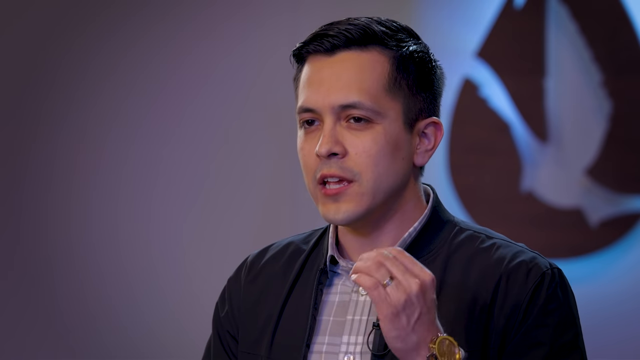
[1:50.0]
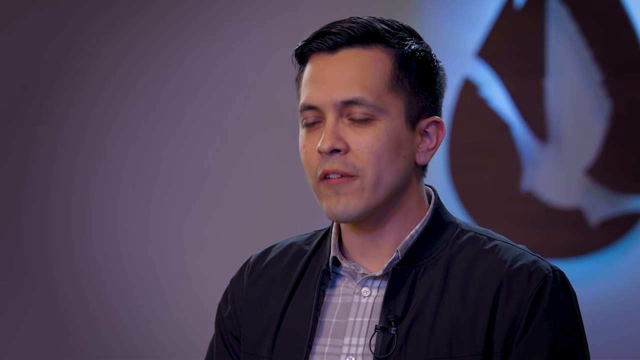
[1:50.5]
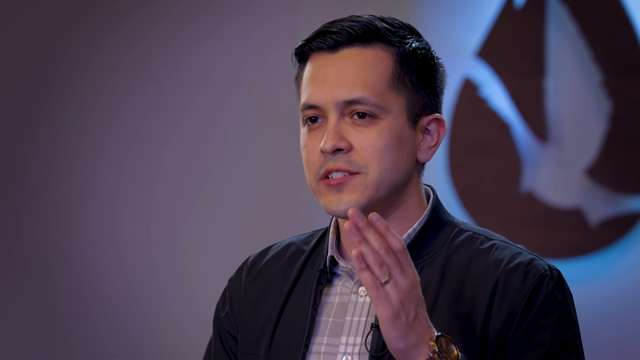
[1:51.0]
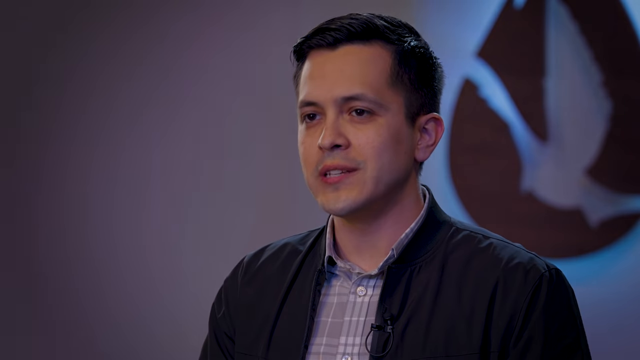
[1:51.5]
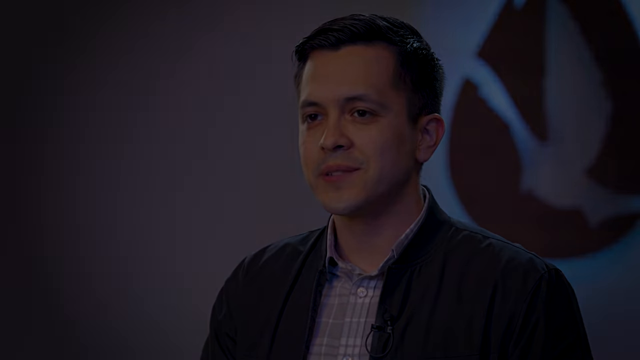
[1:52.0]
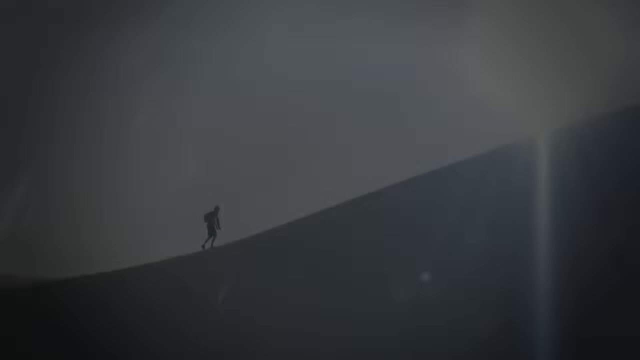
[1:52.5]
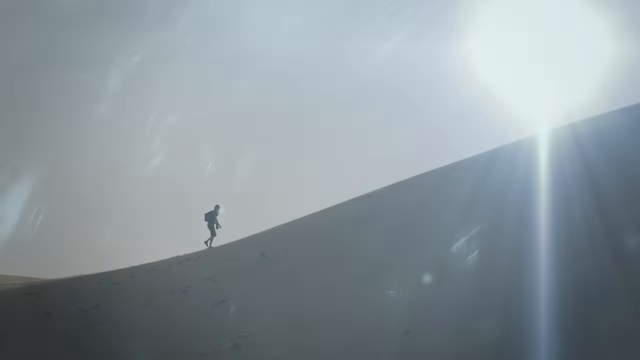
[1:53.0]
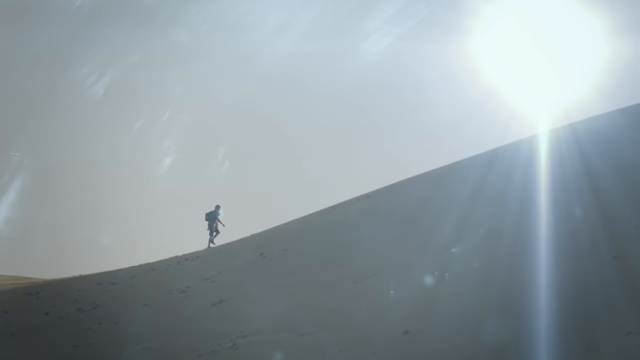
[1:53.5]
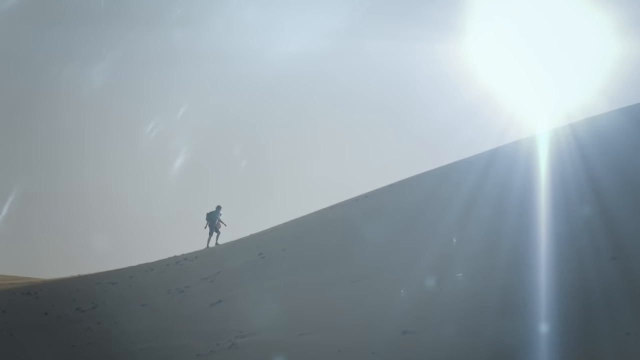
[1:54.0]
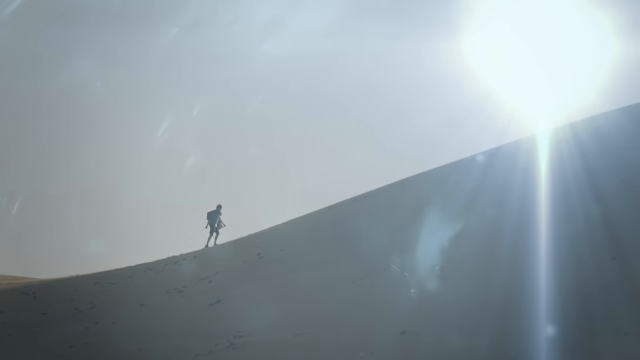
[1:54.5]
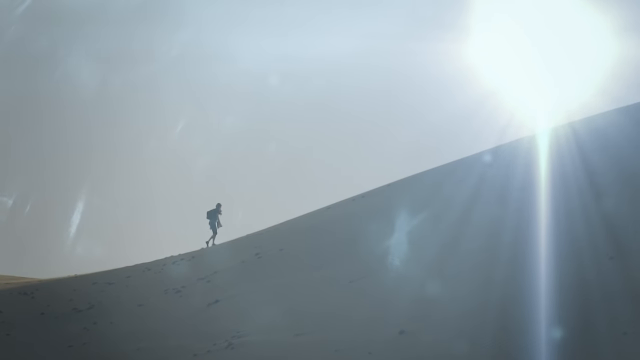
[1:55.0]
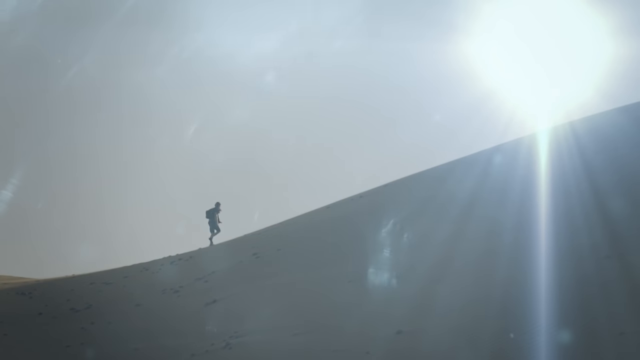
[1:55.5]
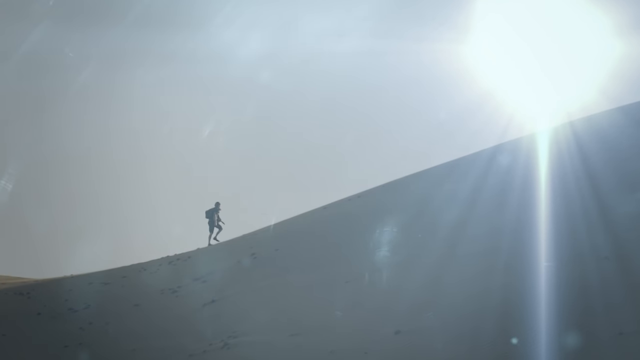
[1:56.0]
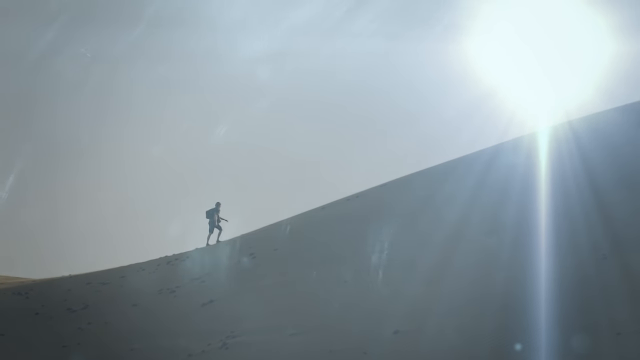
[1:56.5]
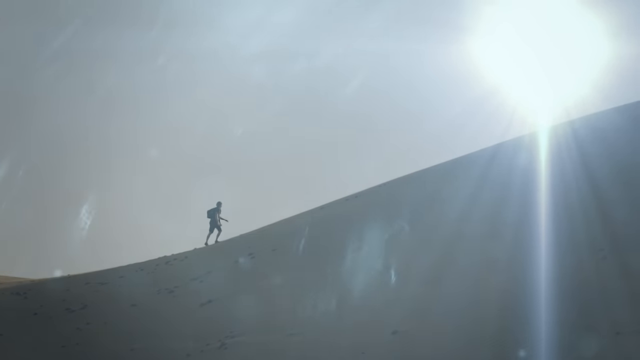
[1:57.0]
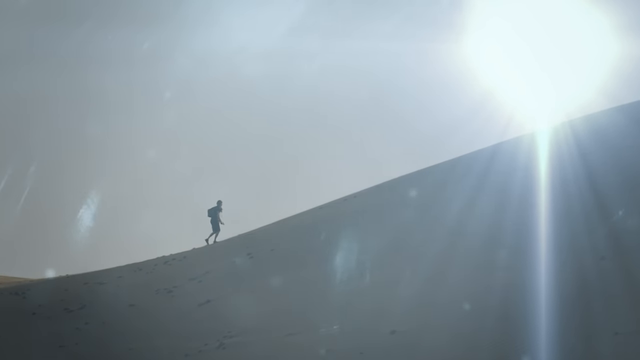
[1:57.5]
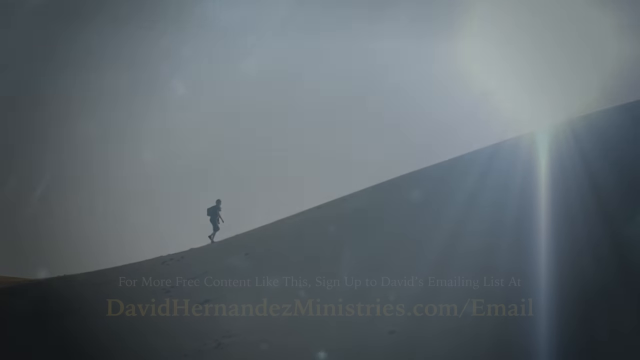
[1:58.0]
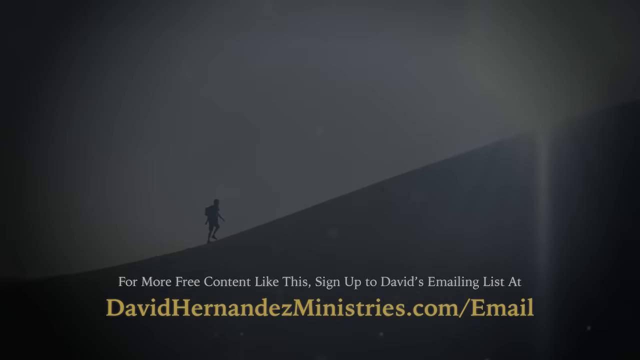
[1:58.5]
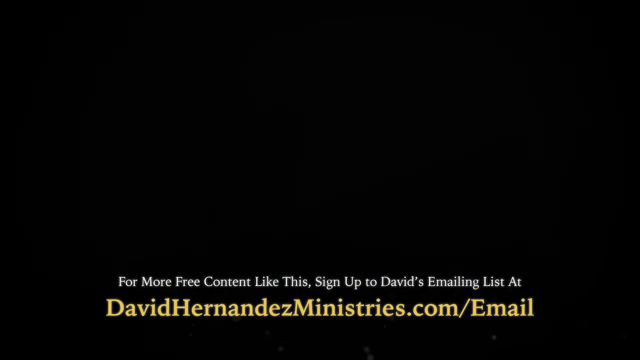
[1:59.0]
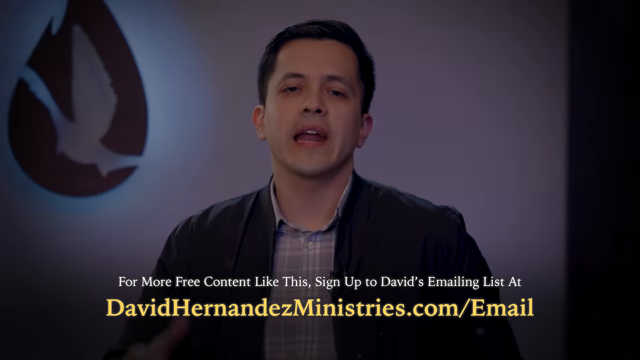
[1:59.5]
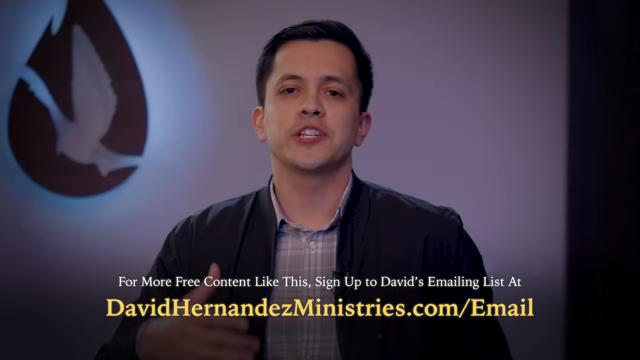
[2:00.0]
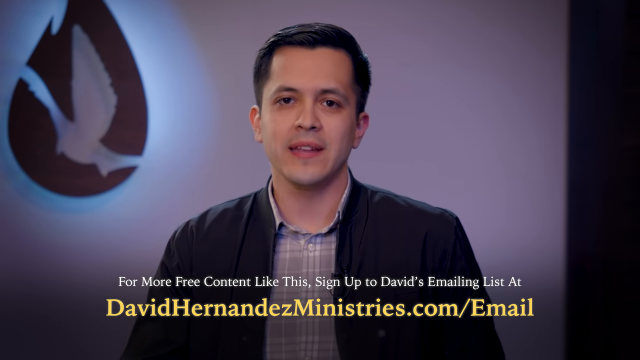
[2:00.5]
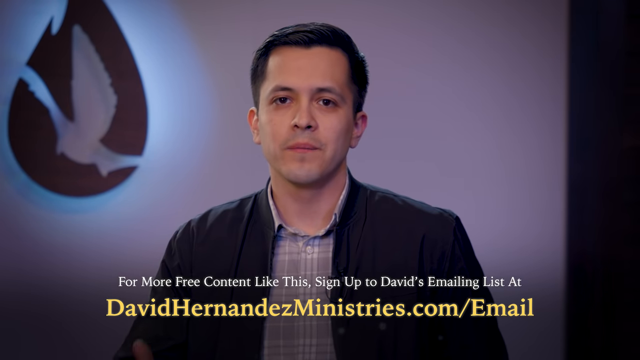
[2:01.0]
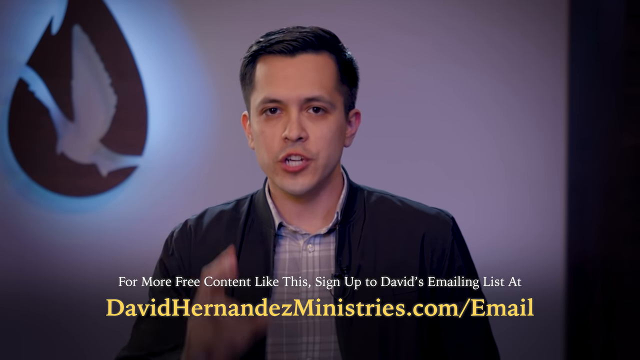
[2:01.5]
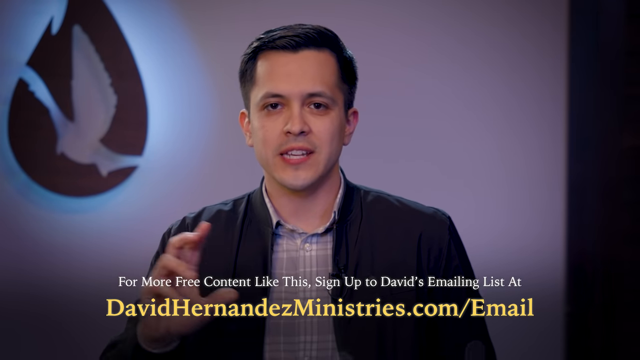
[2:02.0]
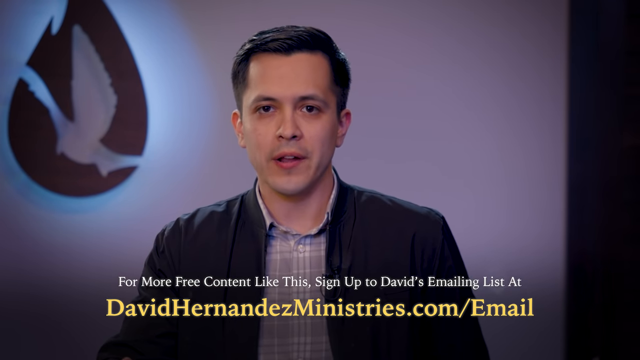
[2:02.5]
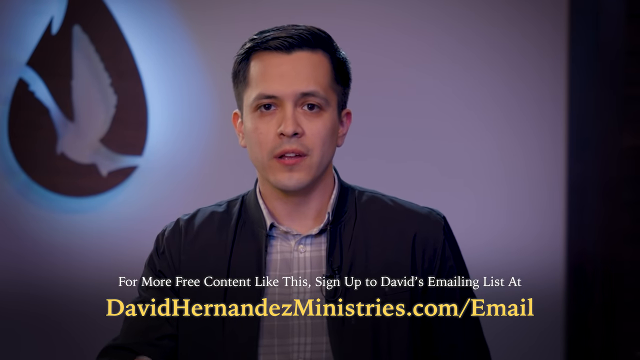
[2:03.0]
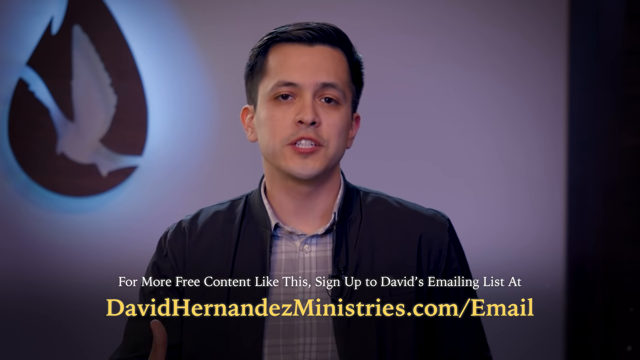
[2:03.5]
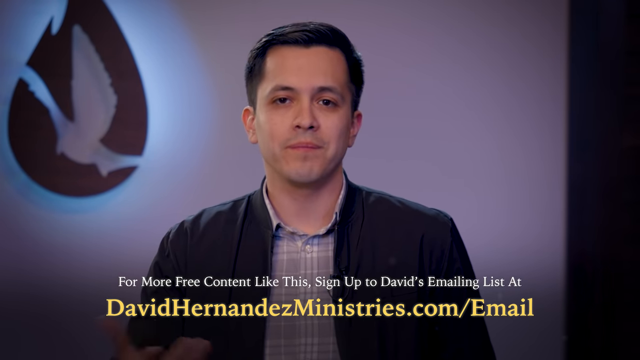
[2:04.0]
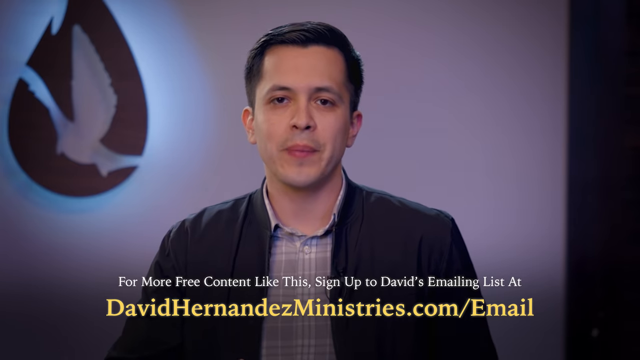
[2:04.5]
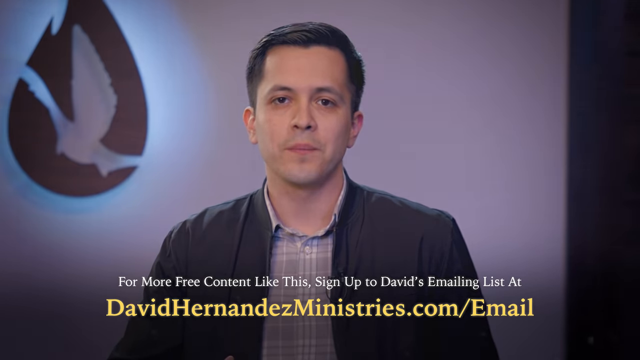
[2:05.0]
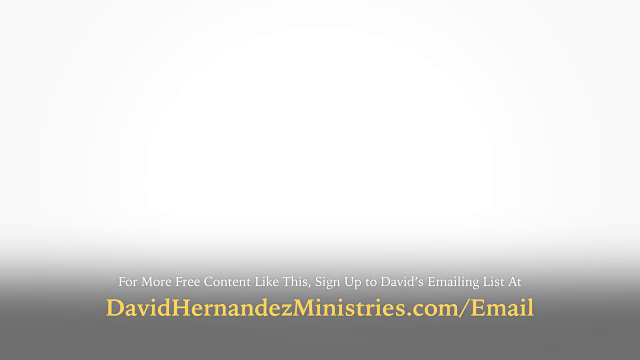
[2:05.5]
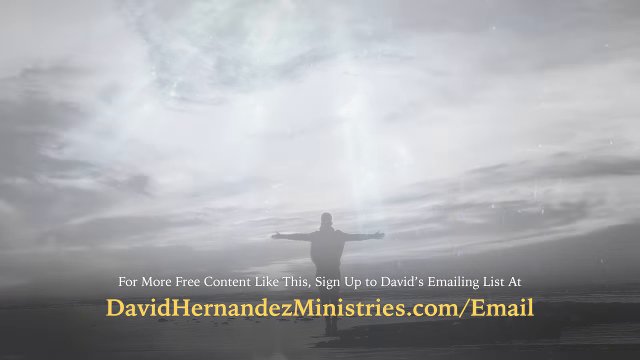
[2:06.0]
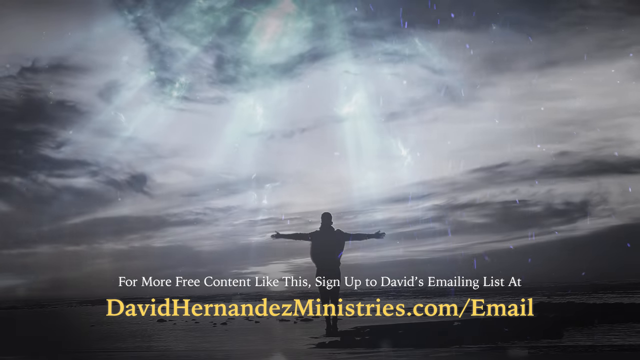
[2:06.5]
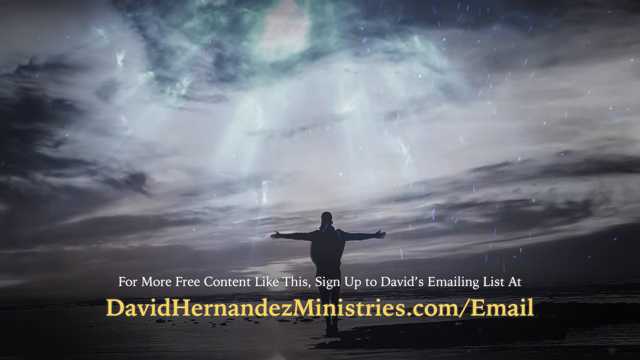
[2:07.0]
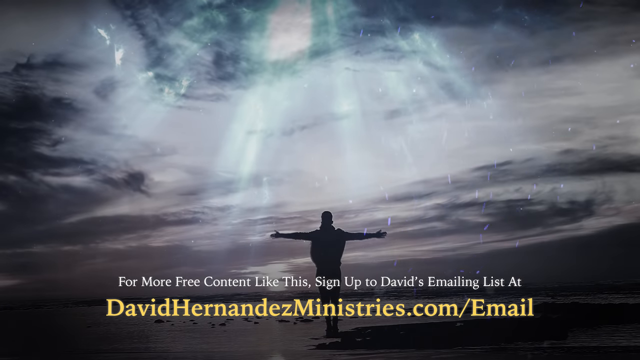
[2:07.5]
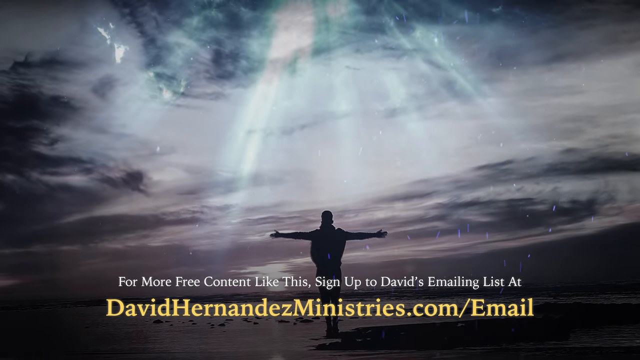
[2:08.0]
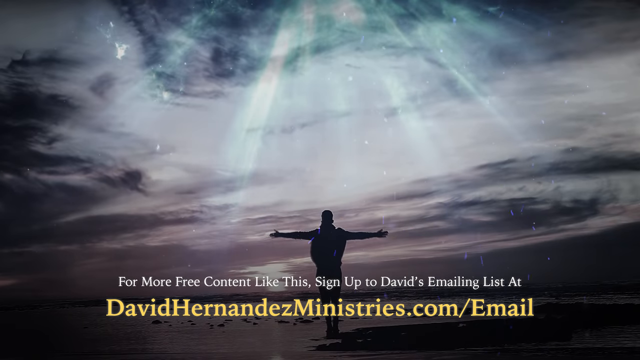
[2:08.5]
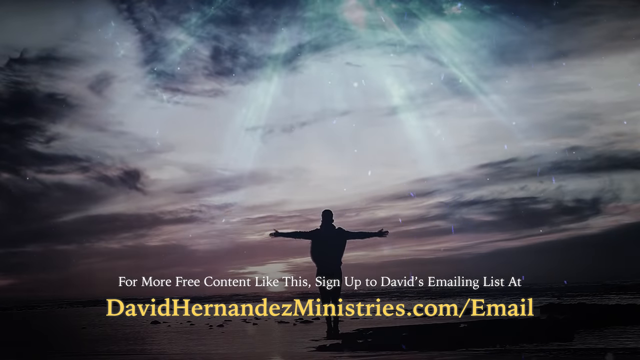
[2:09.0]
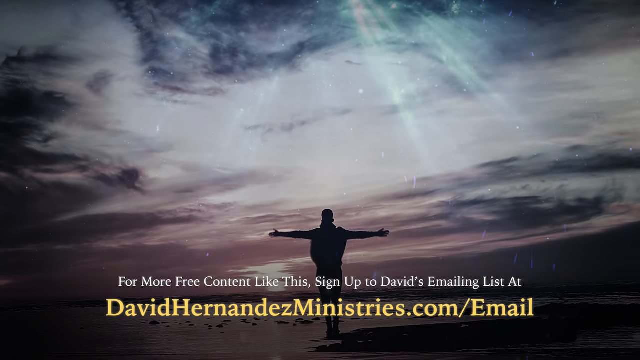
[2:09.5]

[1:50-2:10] A man gesticulates with his left hand while looking to the left. He wears a dark jacket and a light shirt and has dark, very short, well-groomed hair. On the right side of the screen, on the wall behind him, there is a dark, irregularly shaped logo. Next, a video shows a man walking very slowly on the slope of a sandy dune, with a luminous source in the upper right corner illuminating the whole scene. The first man is then shown again, this time with sentences written in white and yellow in the lower part of the screen. In the last part, a photo shows a man with his arms open wide, with his back to the camera; the upper part of the screen shows a sky covered by clouds, and in the lower part of the frame there are two sentences written in white and yellow.